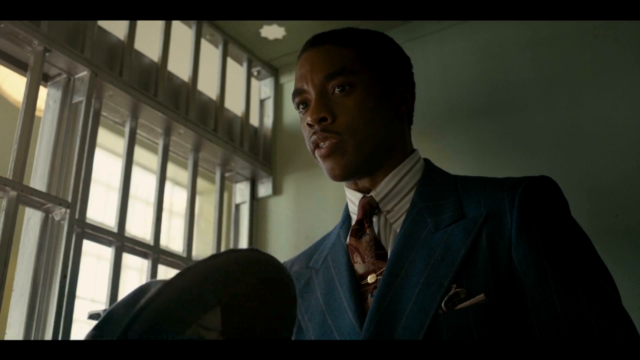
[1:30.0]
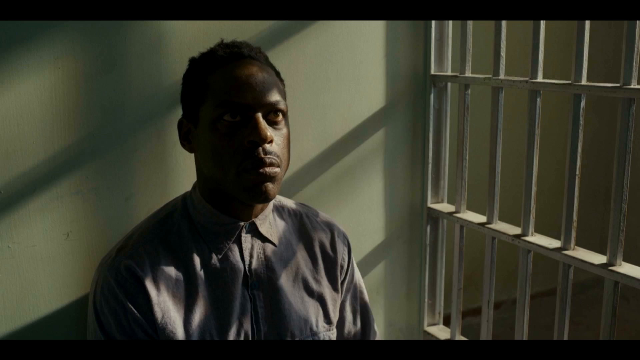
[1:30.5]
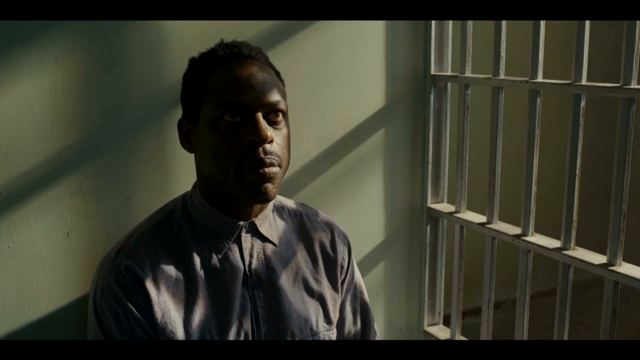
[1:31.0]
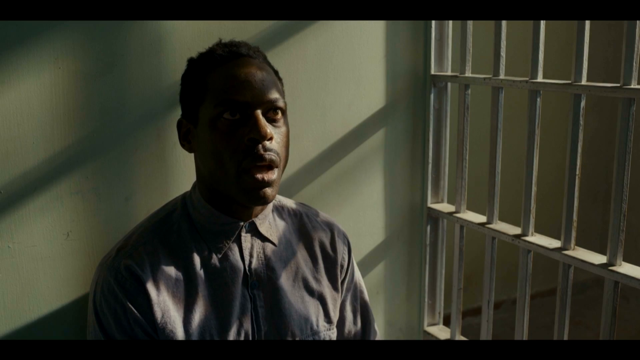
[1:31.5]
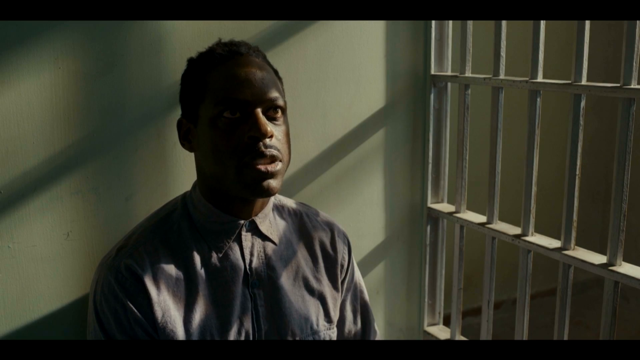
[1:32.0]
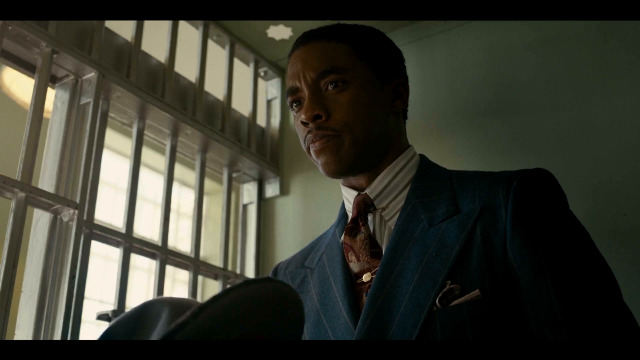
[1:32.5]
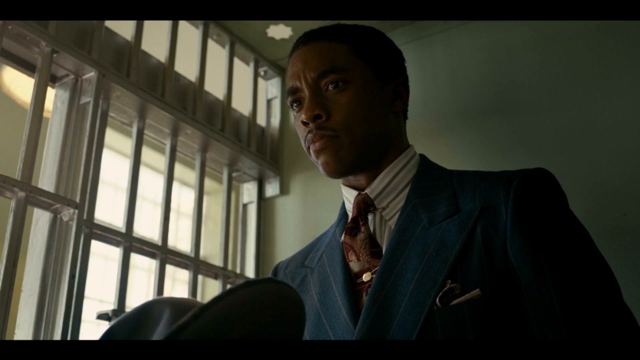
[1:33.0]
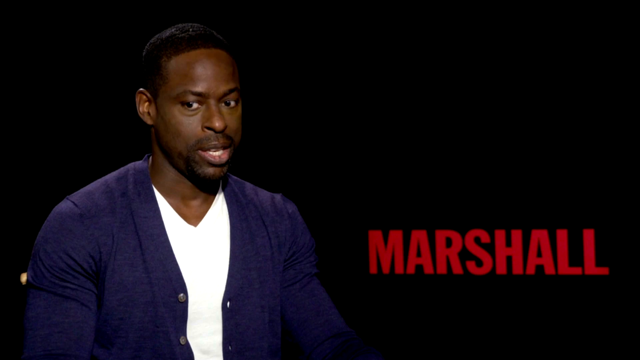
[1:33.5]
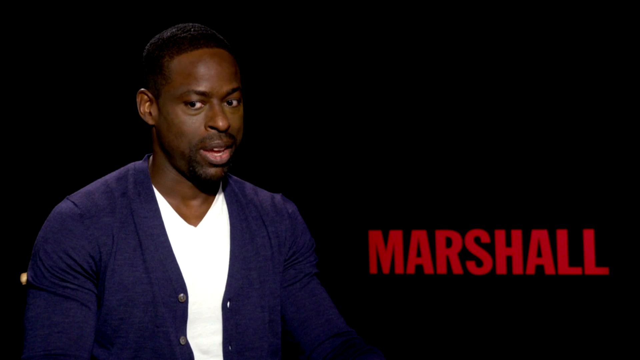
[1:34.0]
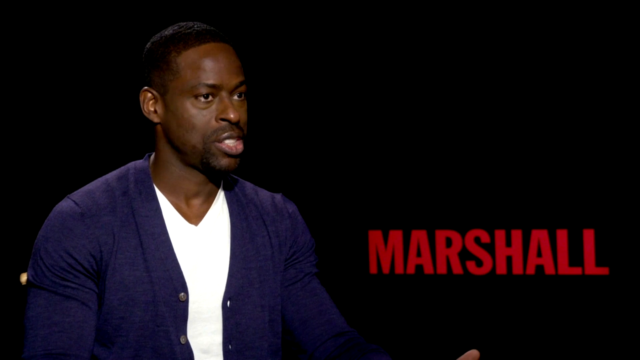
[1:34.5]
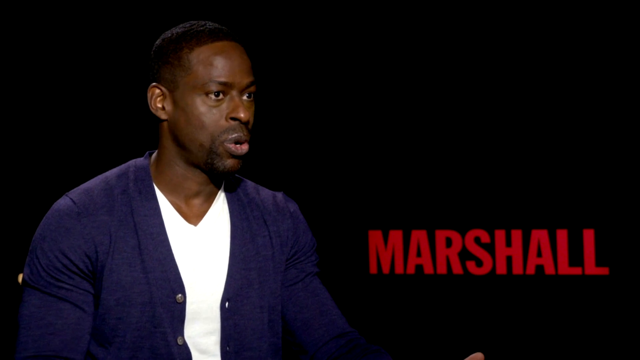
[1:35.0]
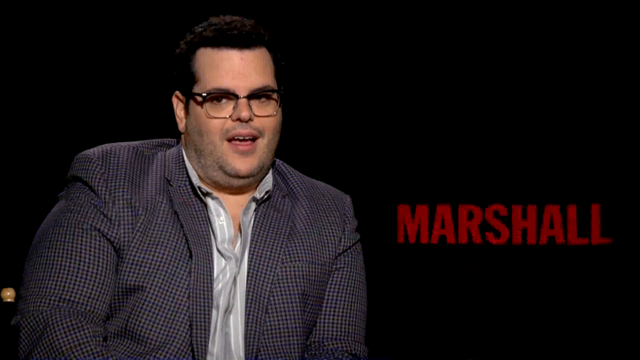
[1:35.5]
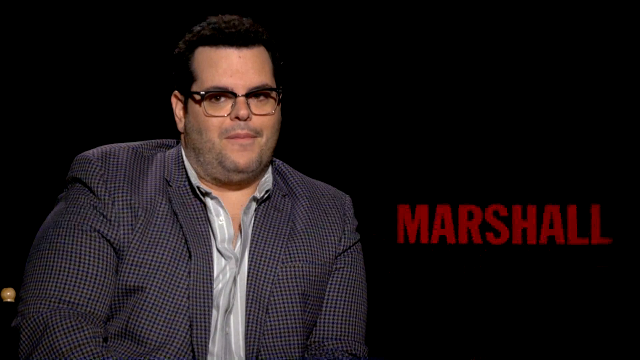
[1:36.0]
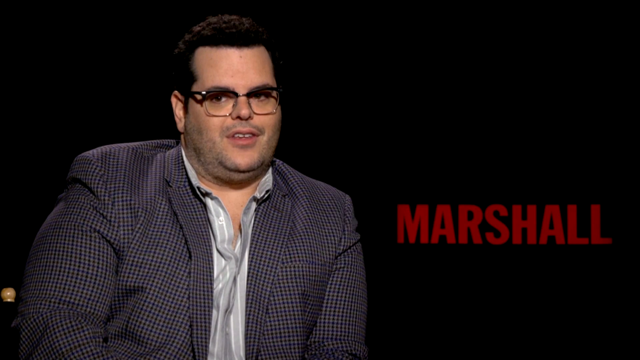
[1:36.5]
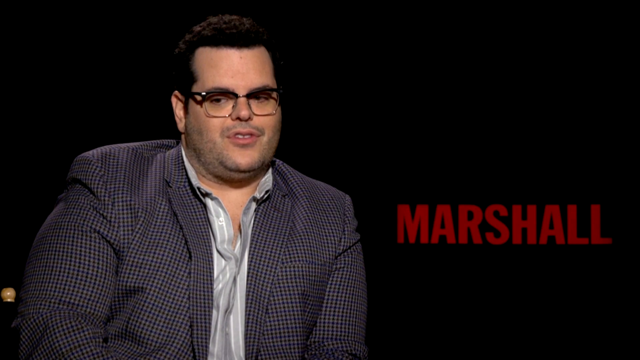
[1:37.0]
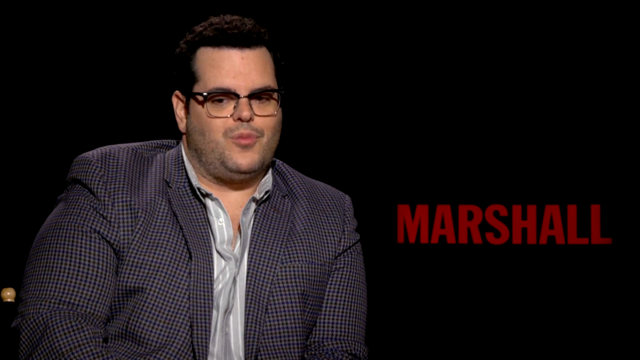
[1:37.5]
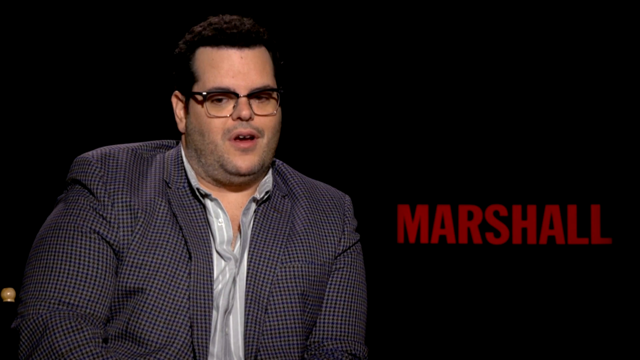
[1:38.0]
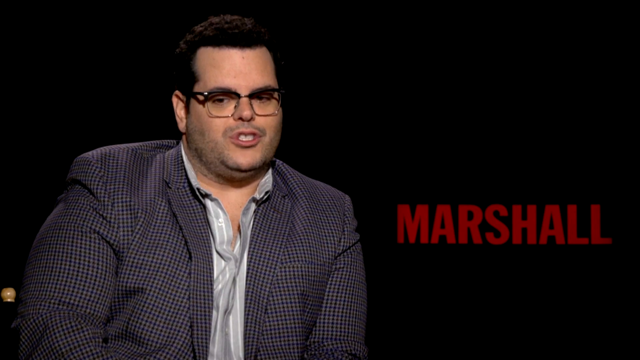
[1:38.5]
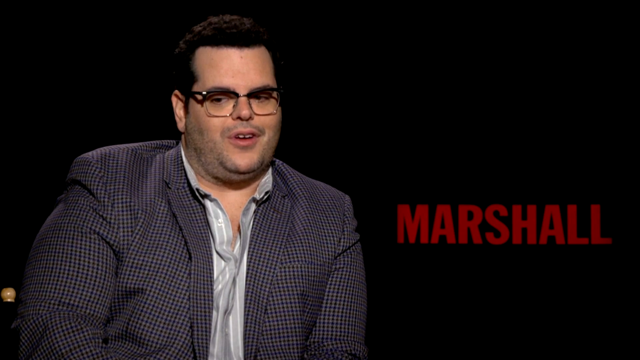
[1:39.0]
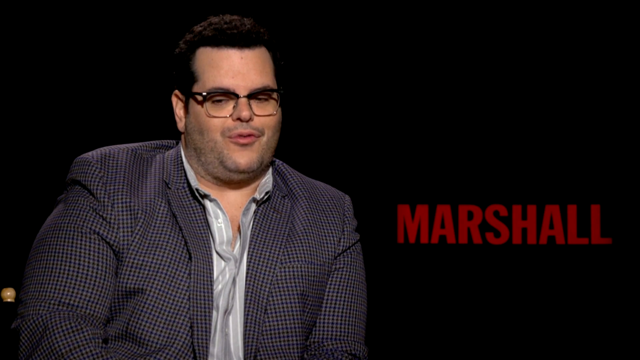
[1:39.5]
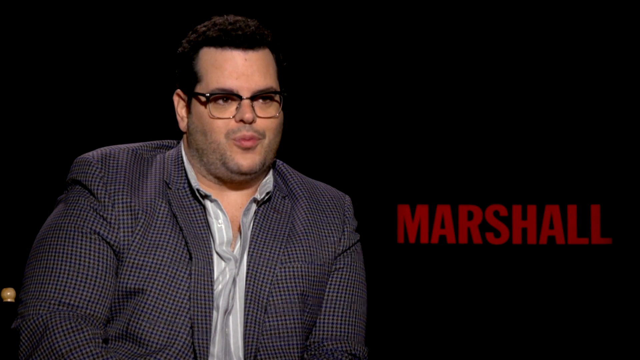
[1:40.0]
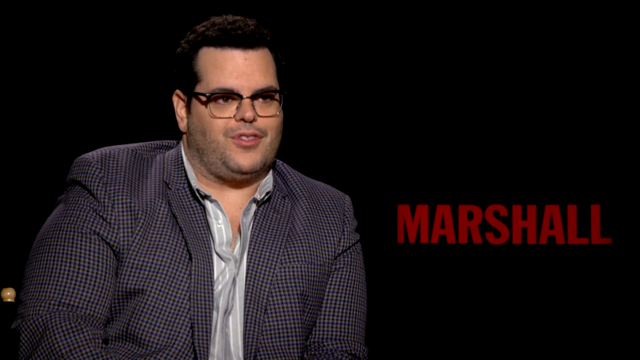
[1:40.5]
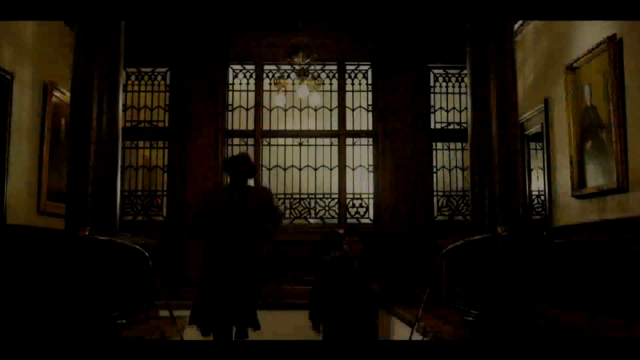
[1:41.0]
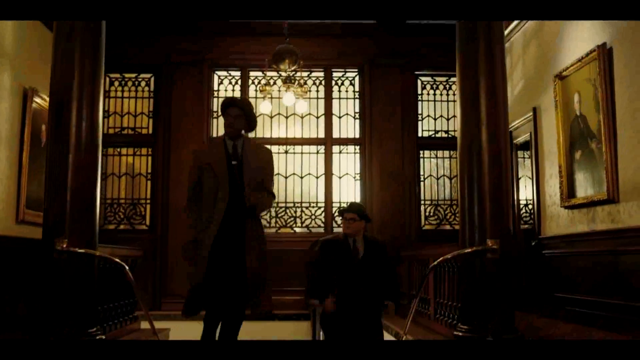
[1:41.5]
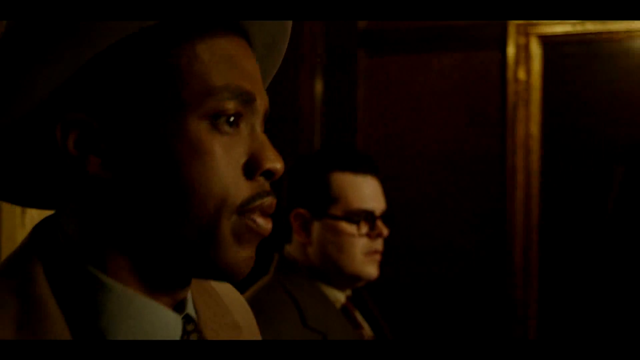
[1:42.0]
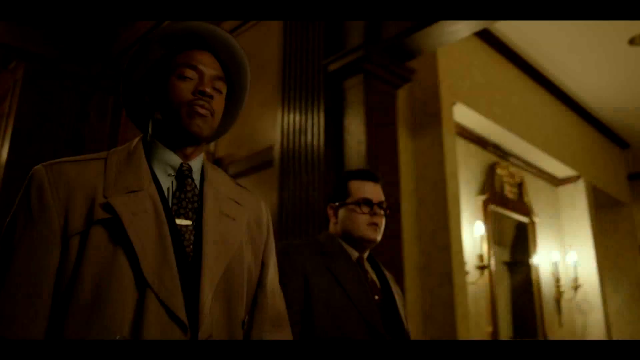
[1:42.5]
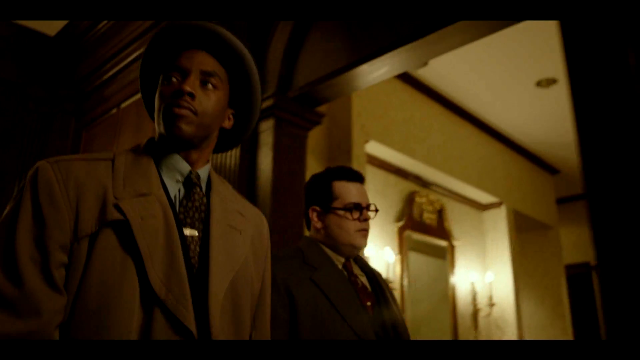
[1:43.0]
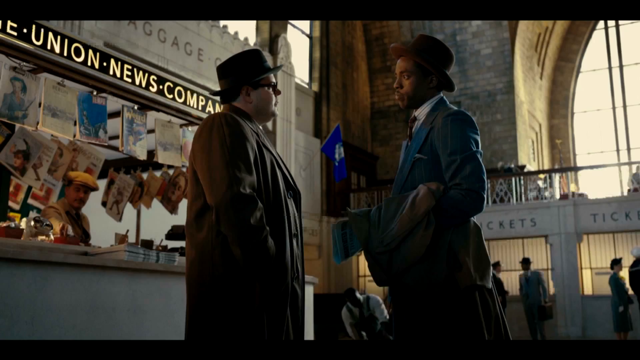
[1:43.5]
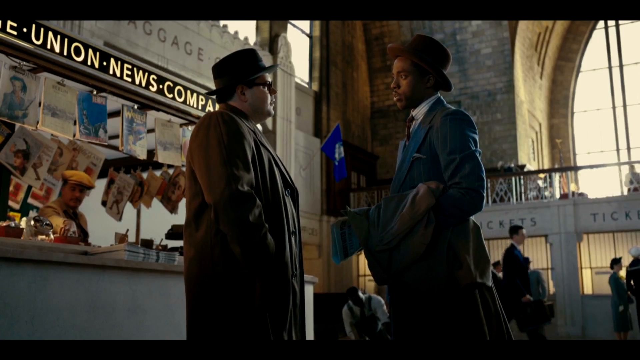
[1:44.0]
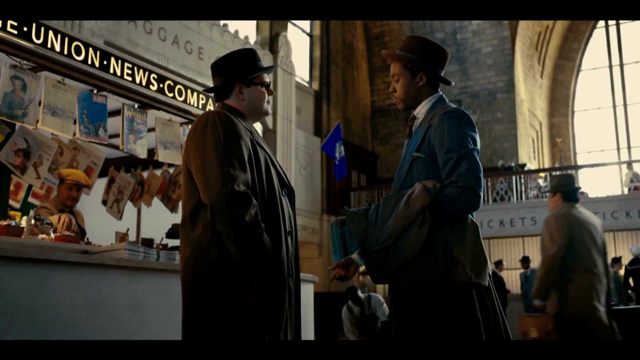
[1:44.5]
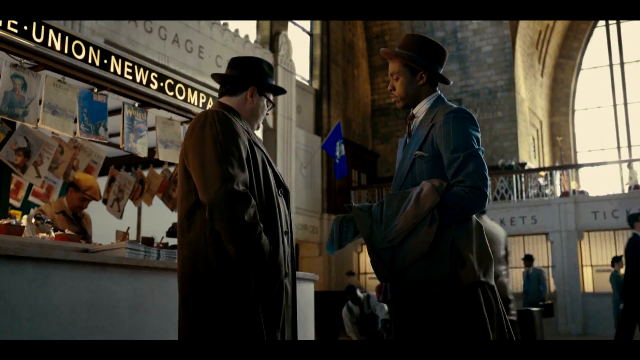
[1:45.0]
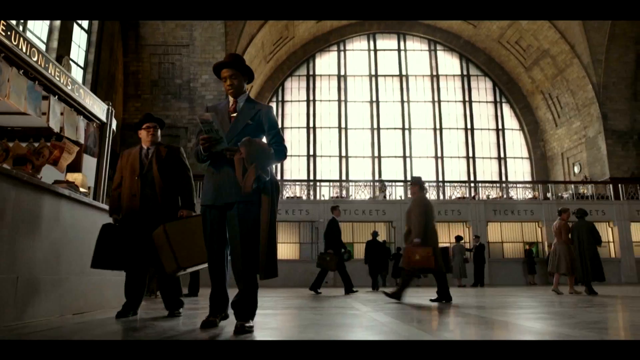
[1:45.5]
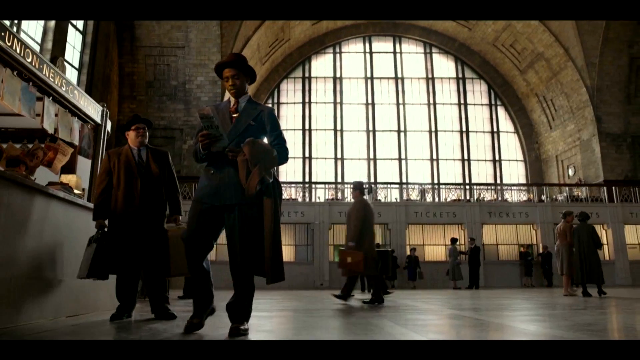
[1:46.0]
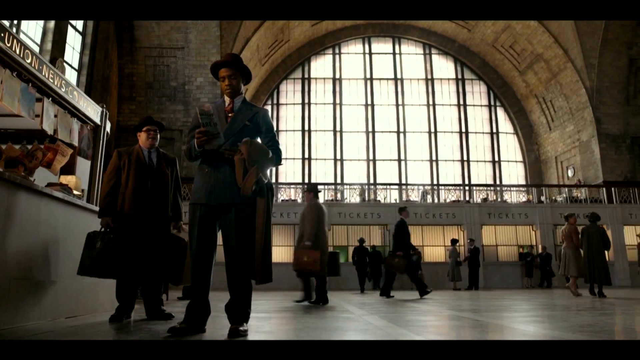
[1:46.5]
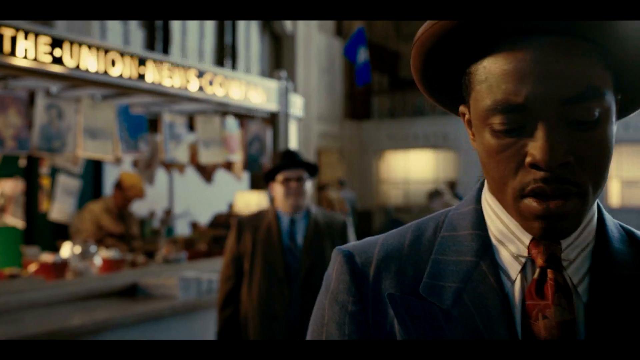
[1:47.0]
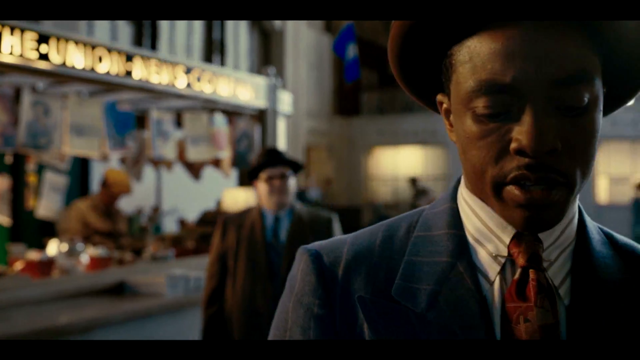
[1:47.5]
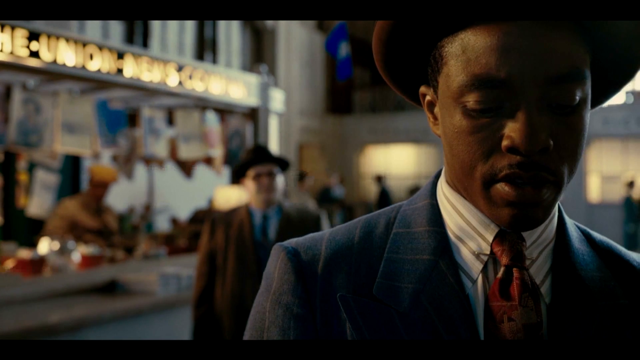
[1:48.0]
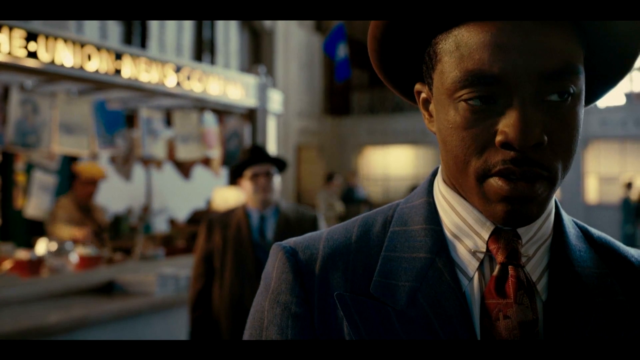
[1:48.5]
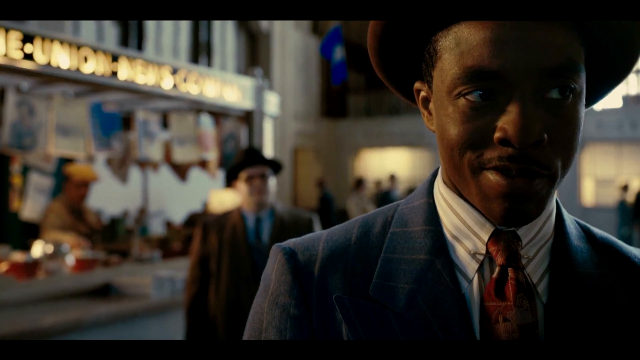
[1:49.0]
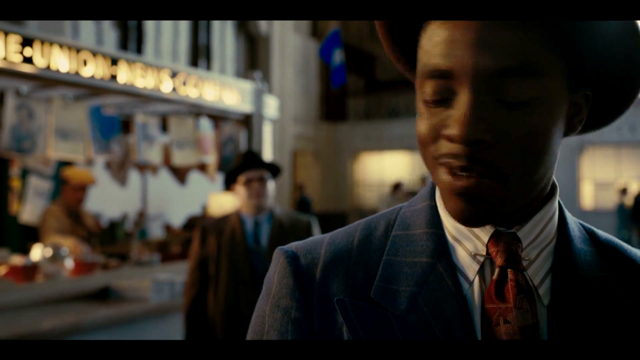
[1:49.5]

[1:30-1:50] The actors continue to talk. Another man appears, a bit chunky-looking, with a short, stubby goatee and black glasses, and he talks about the movie. The same man is also seen in the movie, where he and the main character appear to meet at a train station and seem to be possibly cutting a deal. Near the end, the main character kind of smiles and looks back at him.